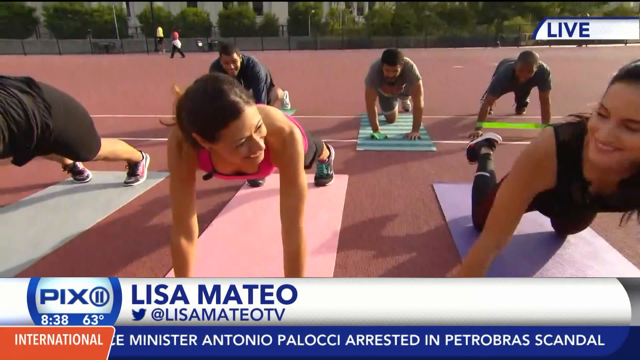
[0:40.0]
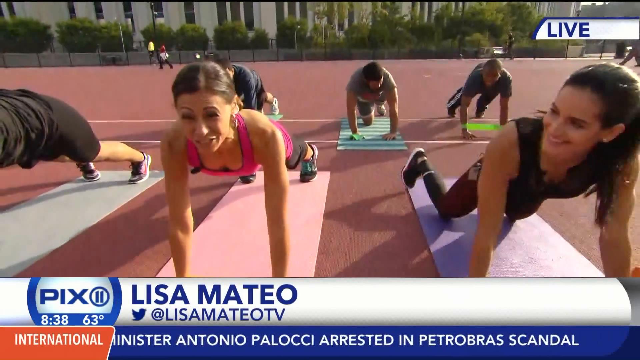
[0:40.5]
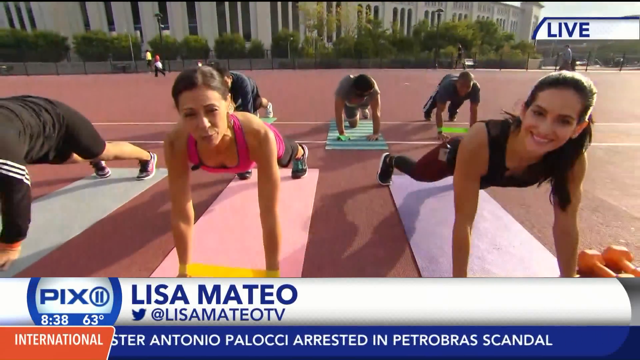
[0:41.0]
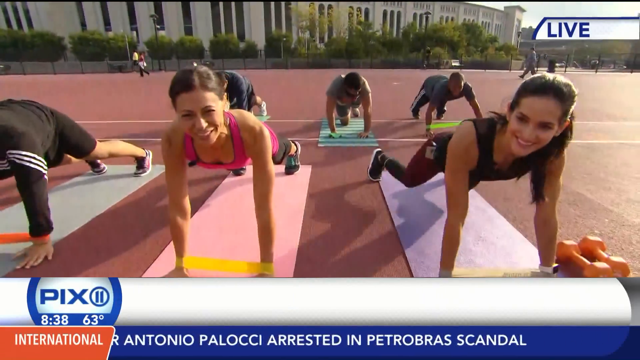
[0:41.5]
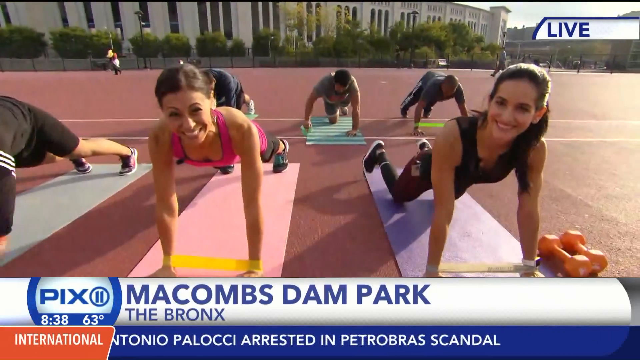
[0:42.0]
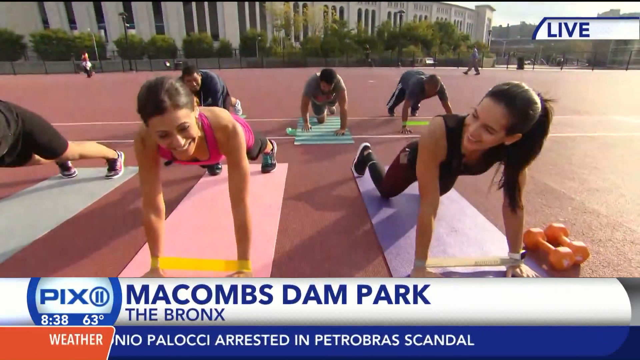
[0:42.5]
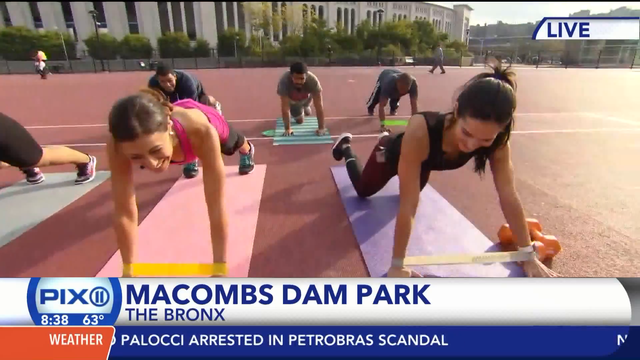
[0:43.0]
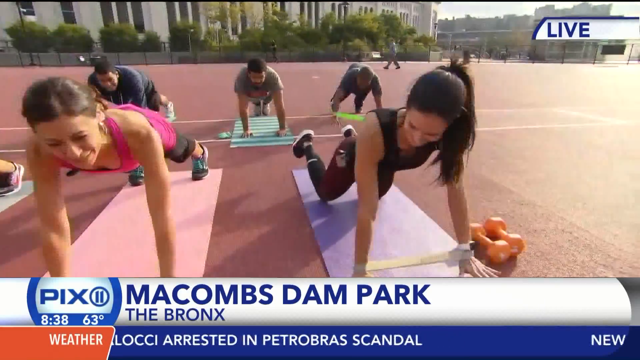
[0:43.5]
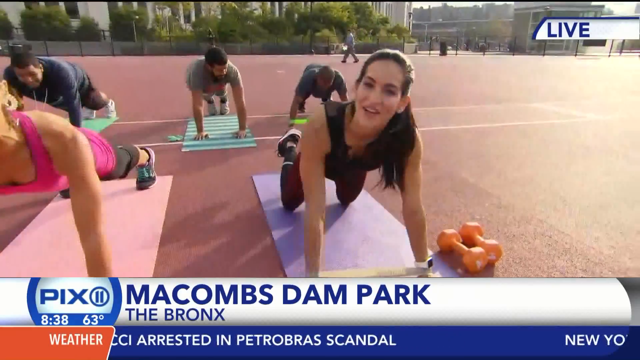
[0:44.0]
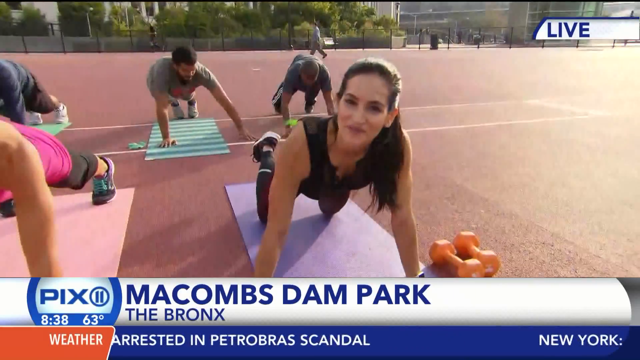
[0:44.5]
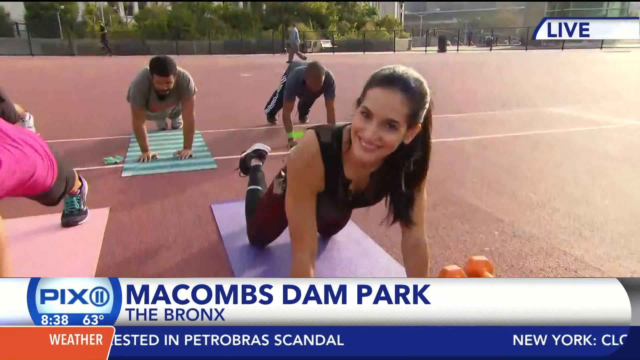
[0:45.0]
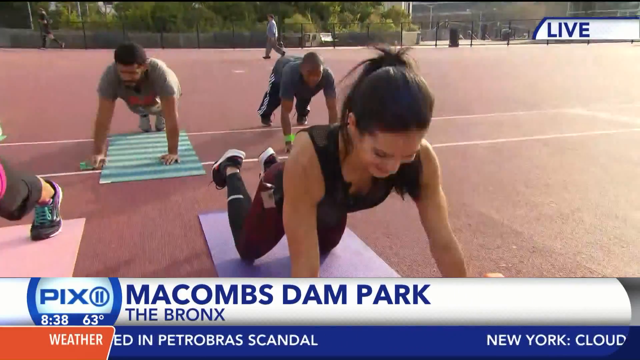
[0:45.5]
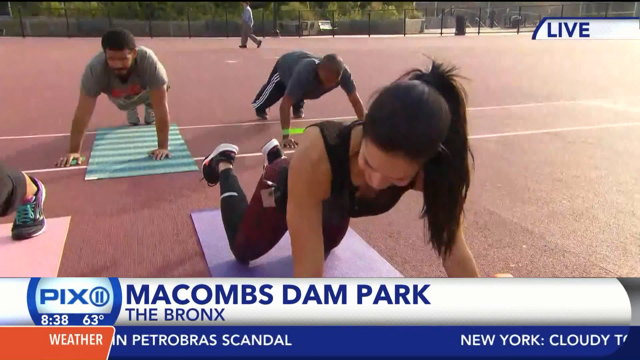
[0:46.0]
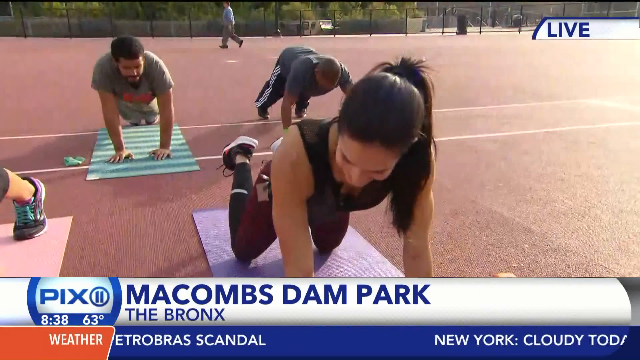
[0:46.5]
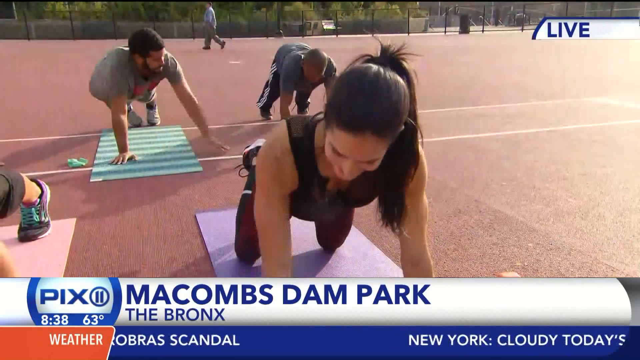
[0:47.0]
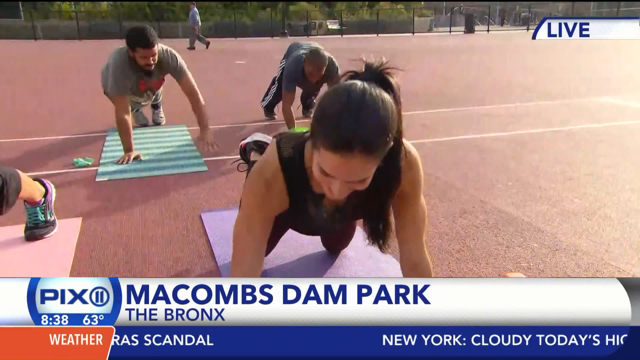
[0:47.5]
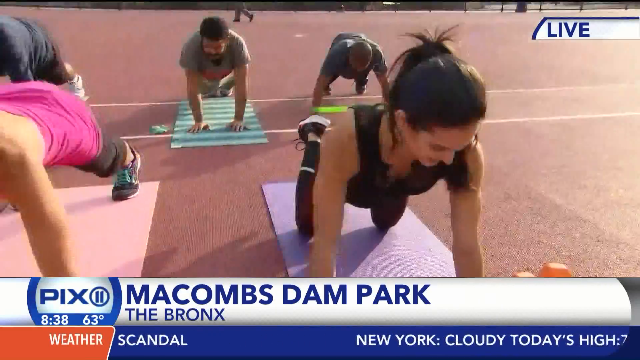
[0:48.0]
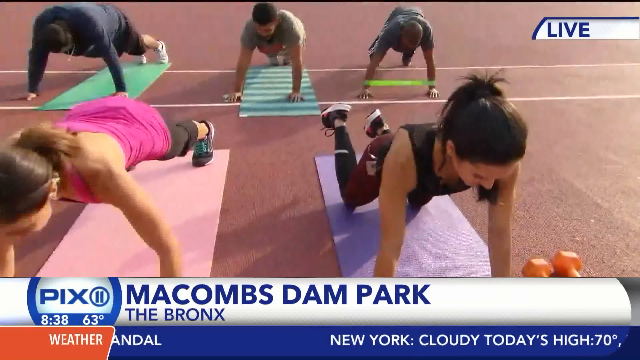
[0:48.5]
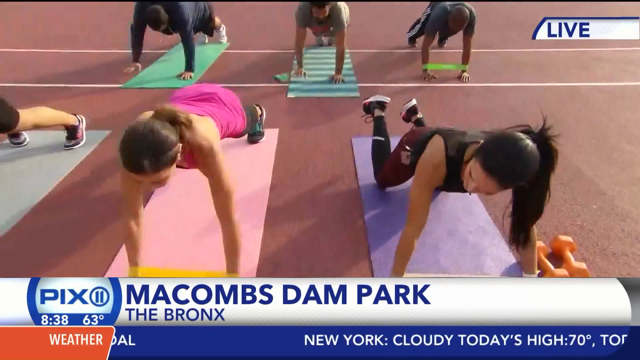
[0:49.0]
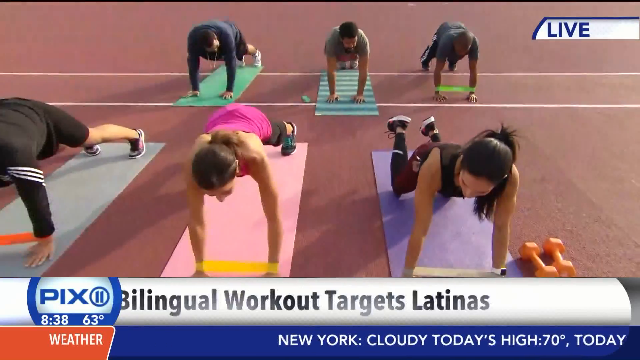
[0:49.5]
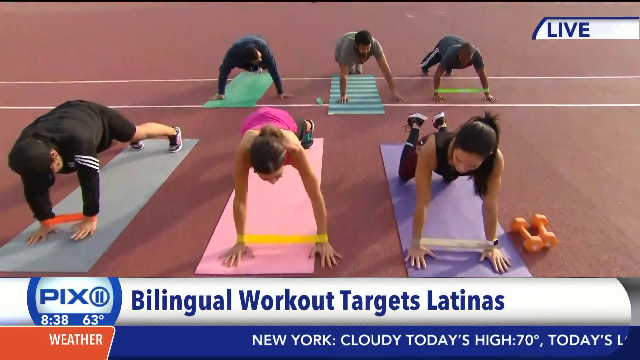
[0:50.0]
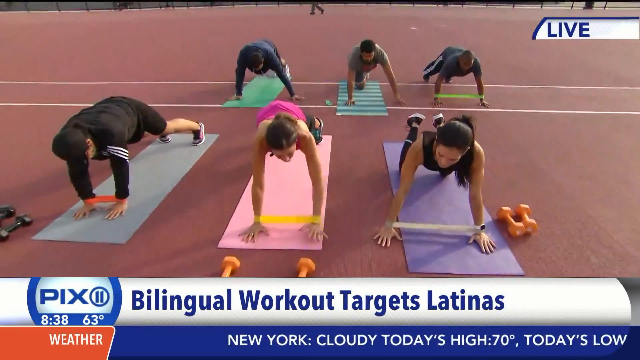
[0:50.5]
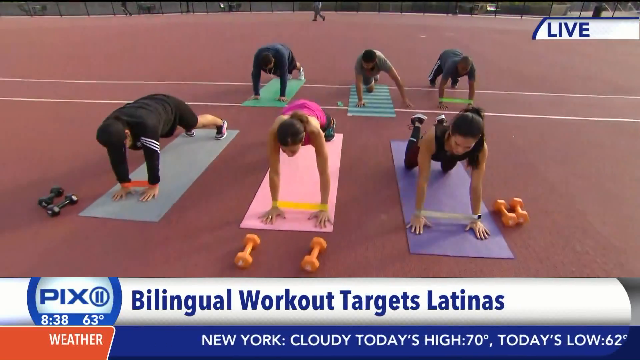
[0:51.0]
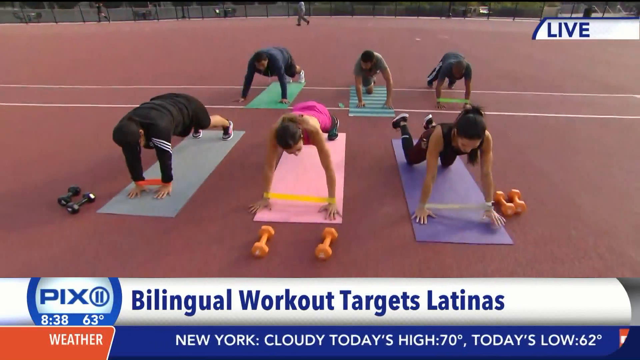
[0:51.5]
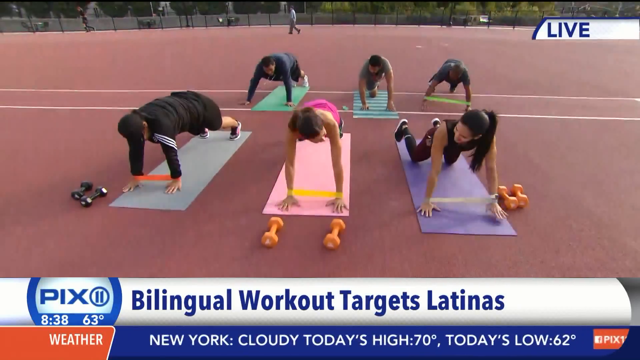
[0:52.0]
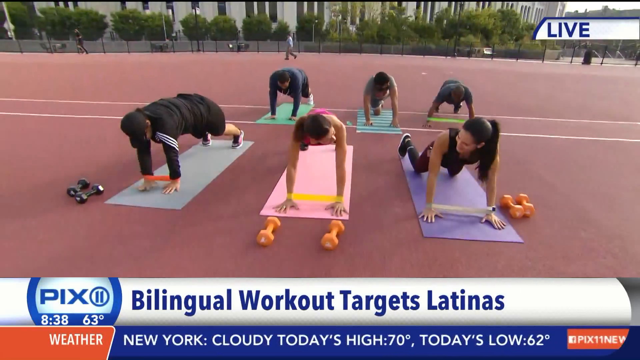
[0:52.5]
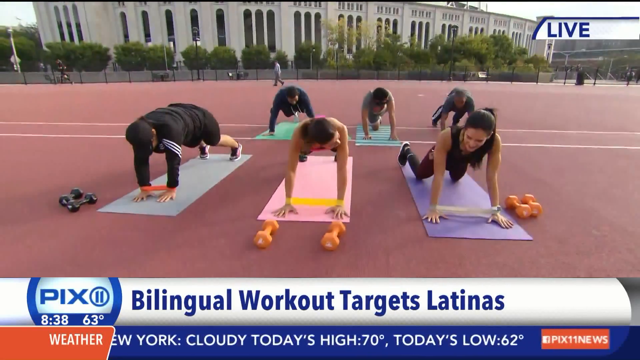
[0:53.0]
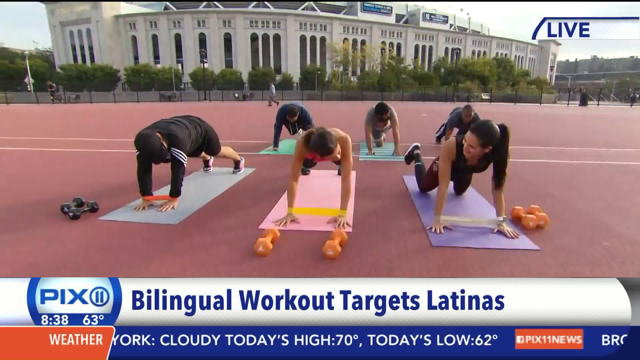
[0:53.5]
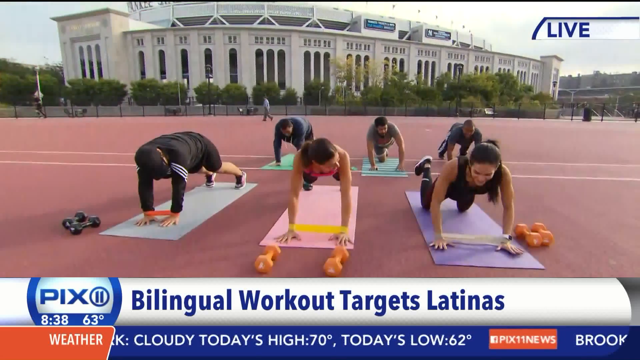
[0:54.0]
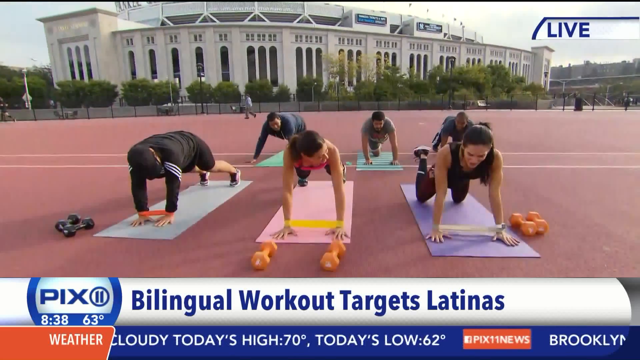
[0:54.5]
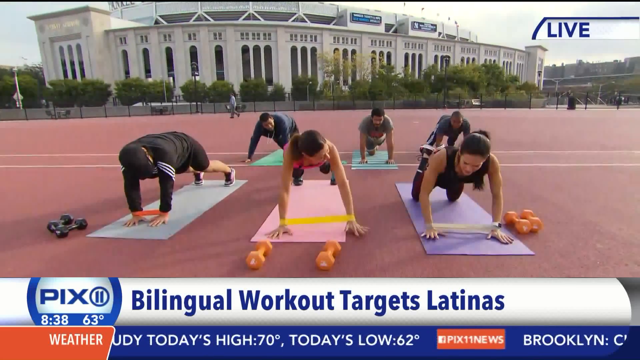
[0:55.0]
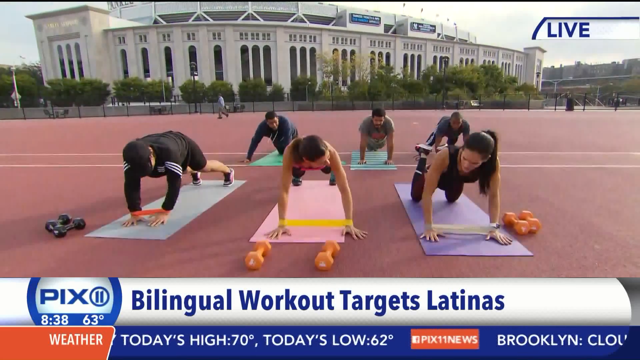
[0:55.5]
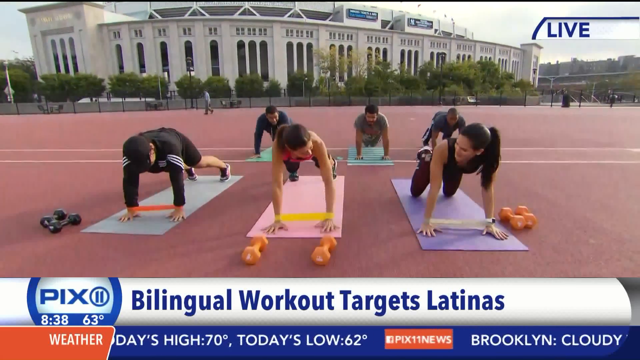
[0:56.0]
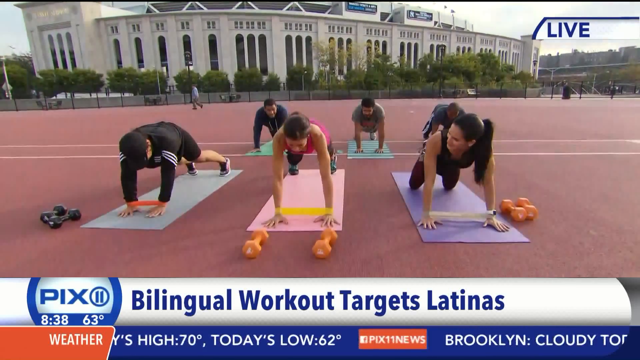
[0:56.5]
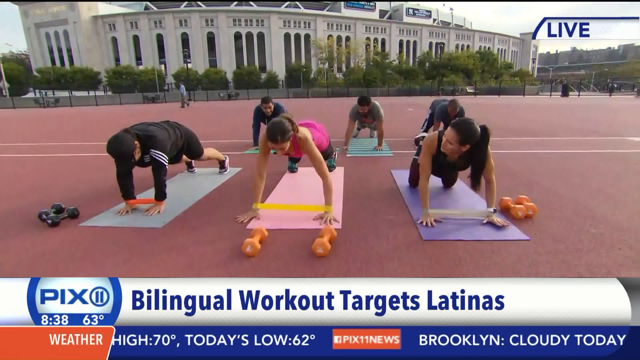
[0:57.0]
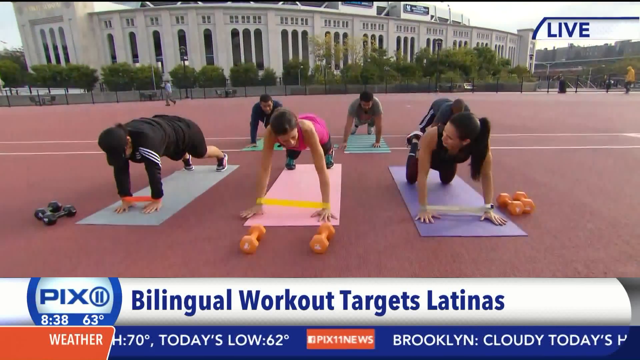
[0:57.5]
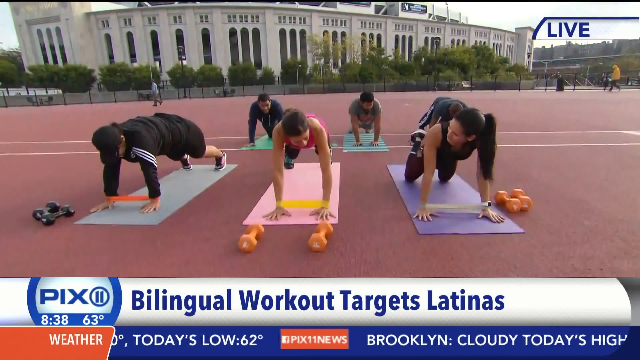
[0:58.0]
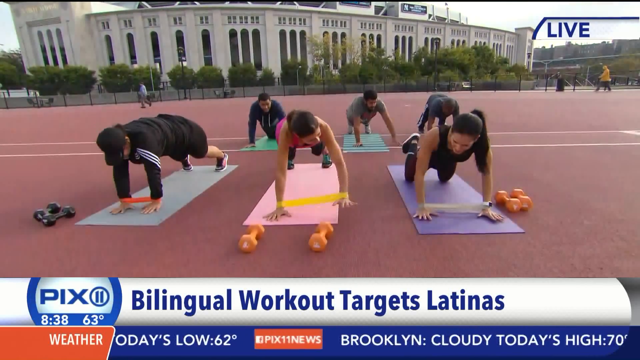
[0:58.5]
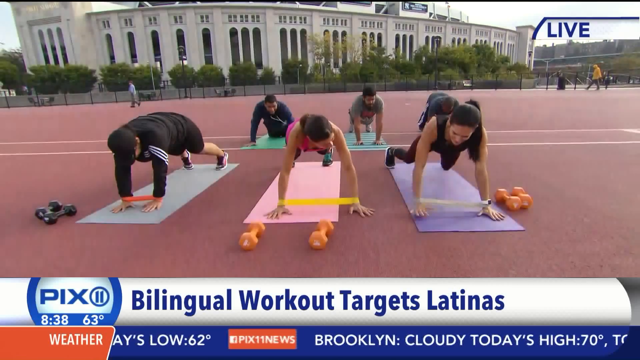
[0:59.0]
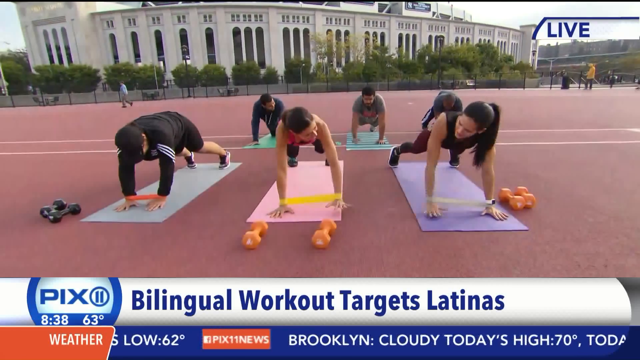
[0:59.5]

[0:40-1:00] Elisa, speaking in the park, does other exercises, bending while holding an elastic ball in her hands. Men are behind her, and a woman is on her left. The camera then moves to this second woman, who greets the camera. The exercise takes place in the Bronx, at Maycombs Dam Park. In the background there is a large stadium, probably for baseball or American football, with a lot of vegetation and trees and few people around, which seems to indicate morning time.